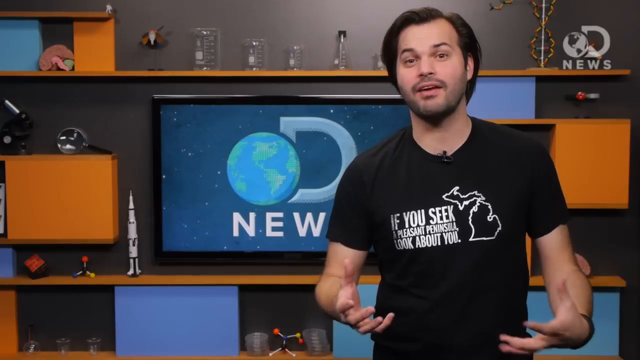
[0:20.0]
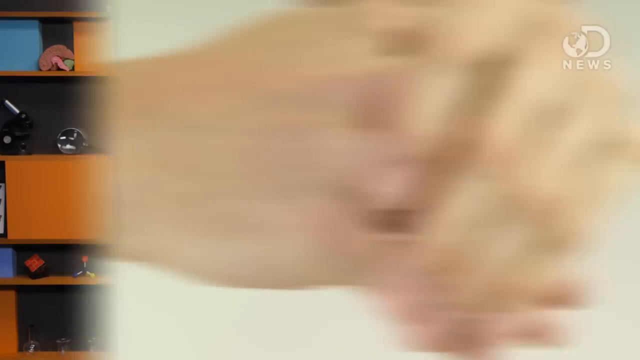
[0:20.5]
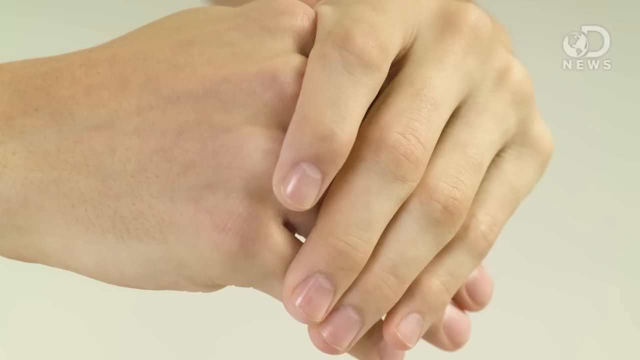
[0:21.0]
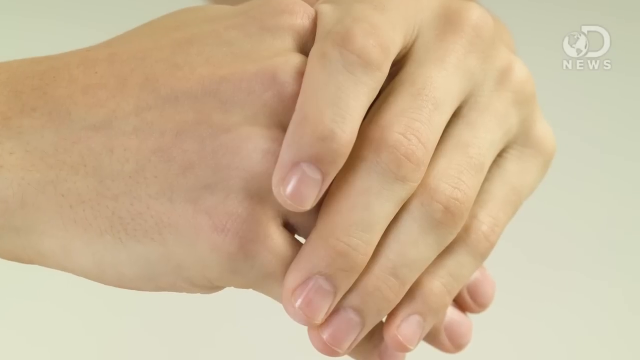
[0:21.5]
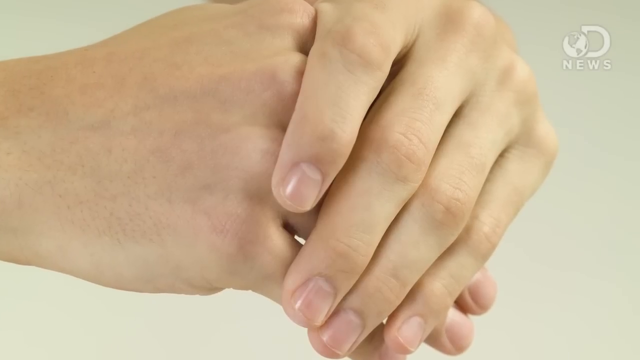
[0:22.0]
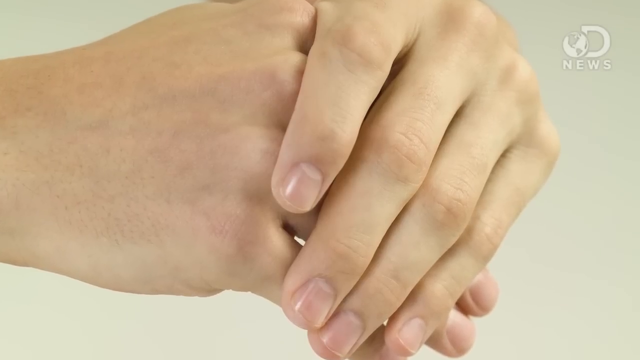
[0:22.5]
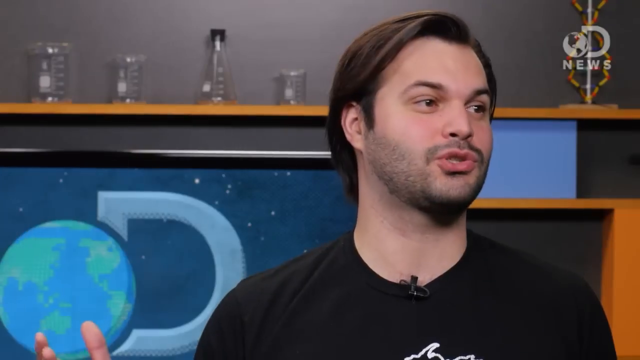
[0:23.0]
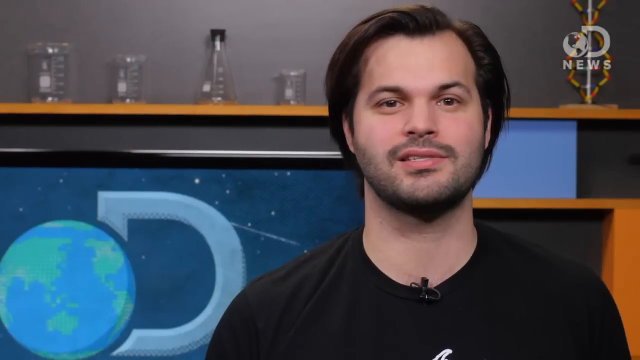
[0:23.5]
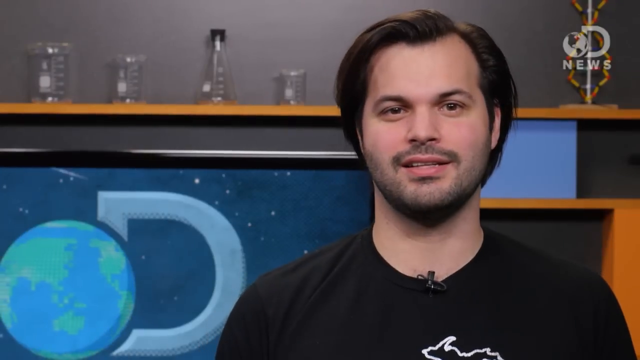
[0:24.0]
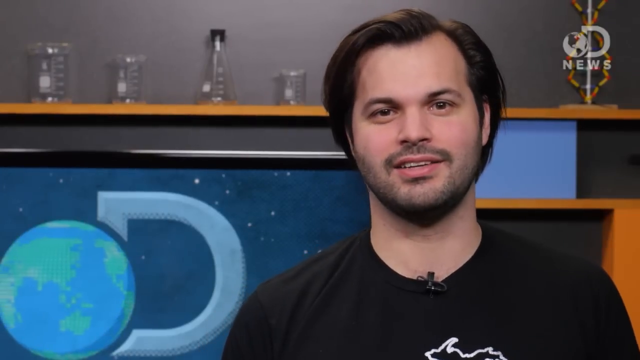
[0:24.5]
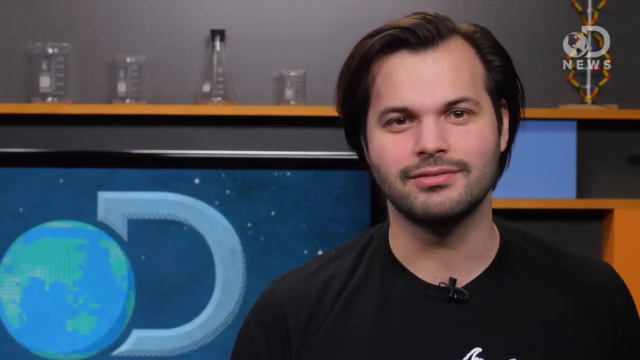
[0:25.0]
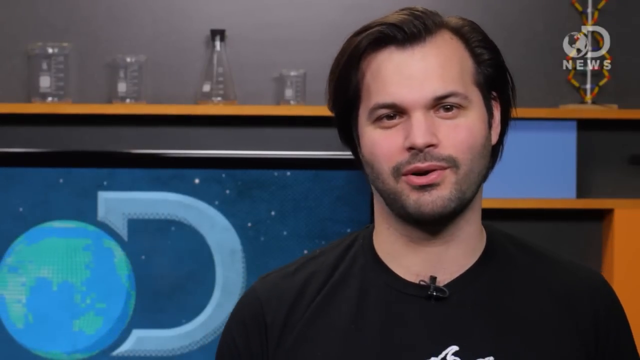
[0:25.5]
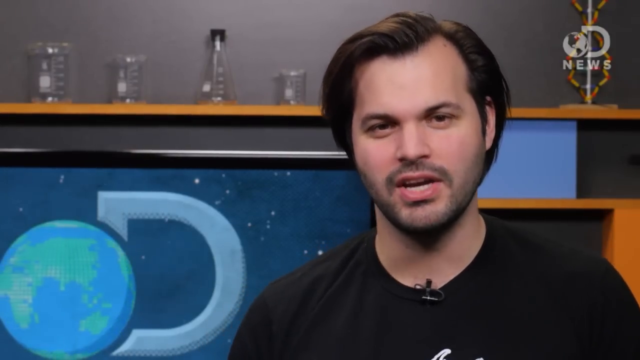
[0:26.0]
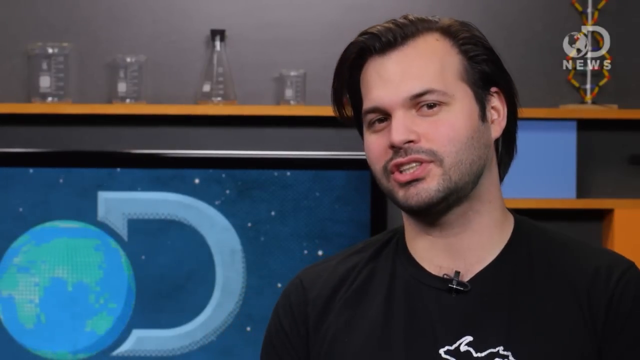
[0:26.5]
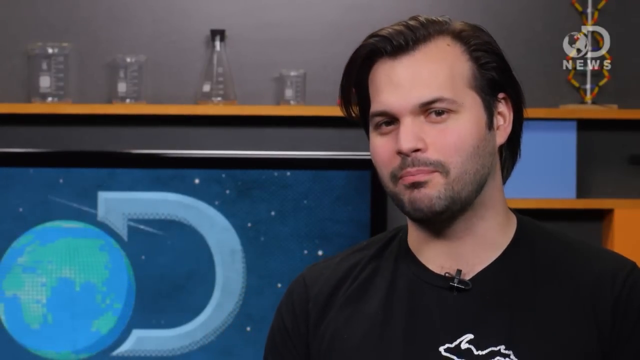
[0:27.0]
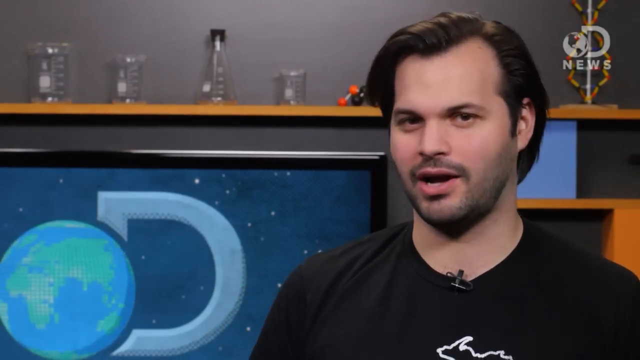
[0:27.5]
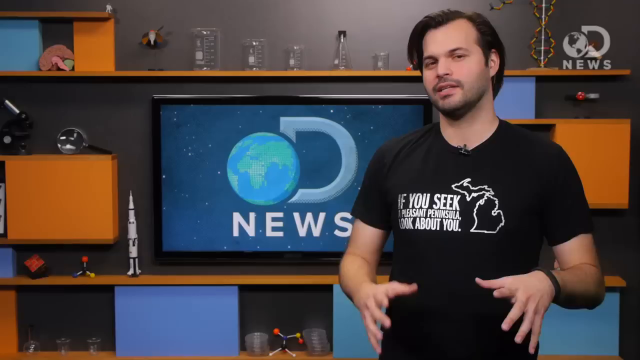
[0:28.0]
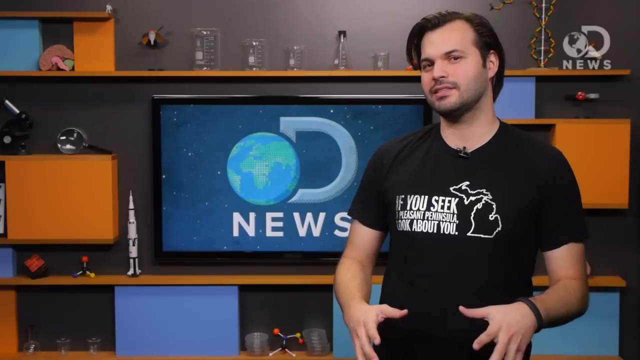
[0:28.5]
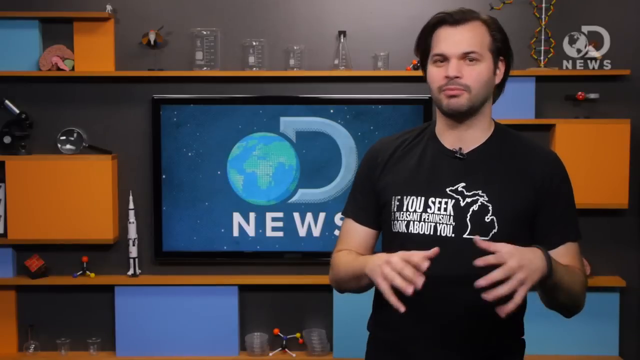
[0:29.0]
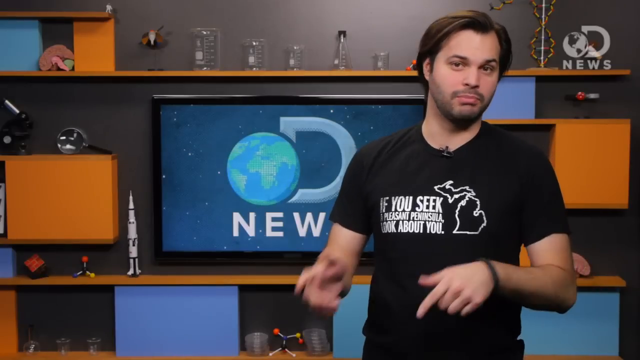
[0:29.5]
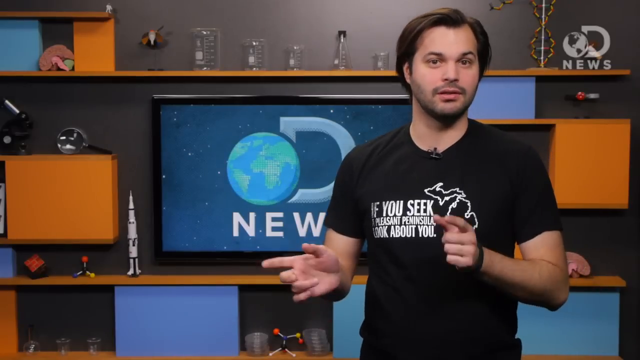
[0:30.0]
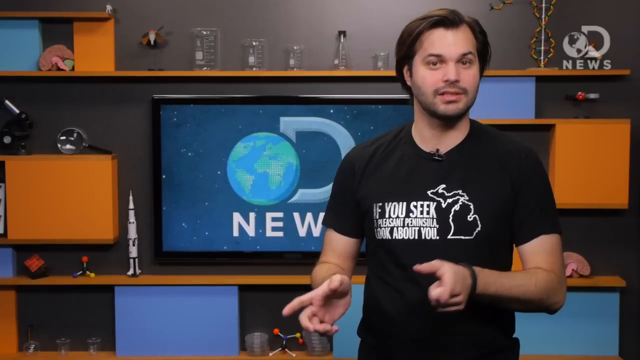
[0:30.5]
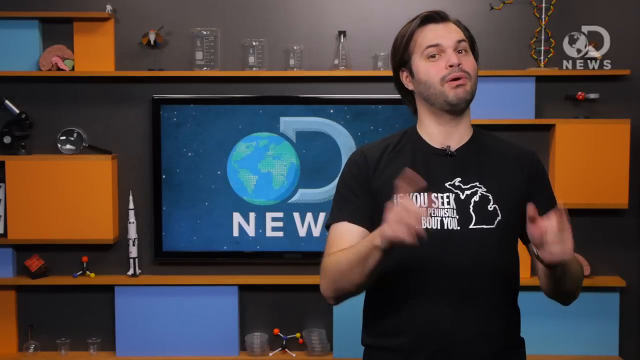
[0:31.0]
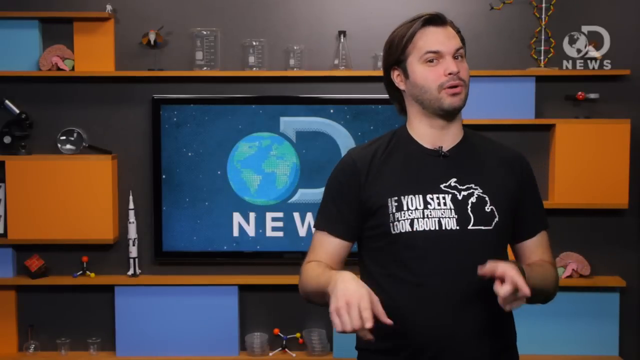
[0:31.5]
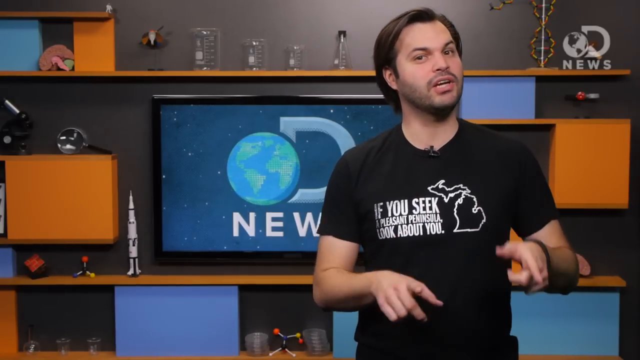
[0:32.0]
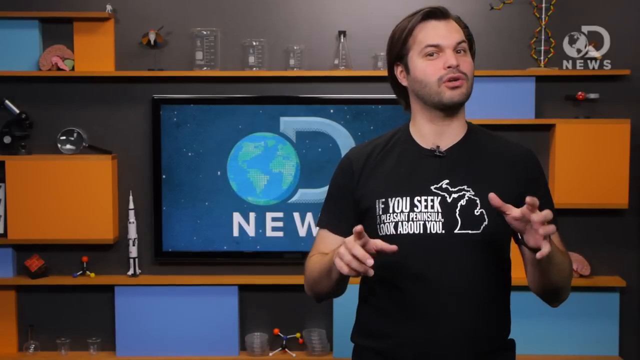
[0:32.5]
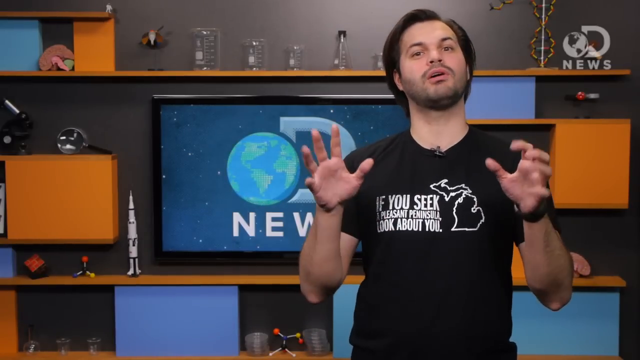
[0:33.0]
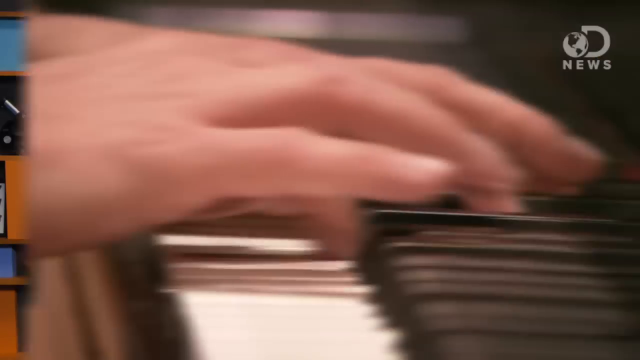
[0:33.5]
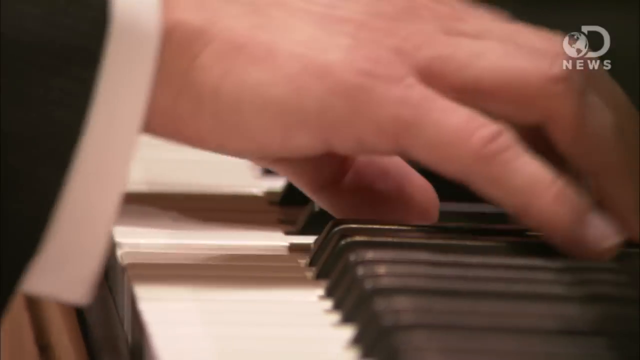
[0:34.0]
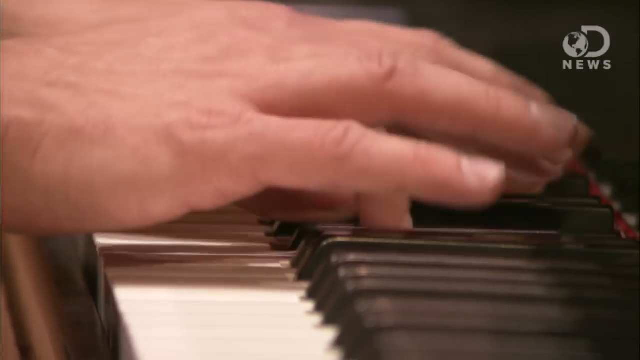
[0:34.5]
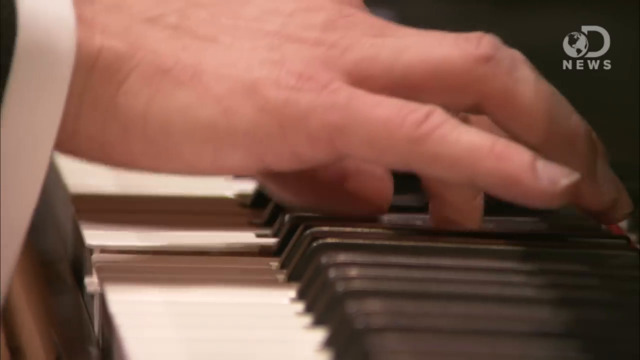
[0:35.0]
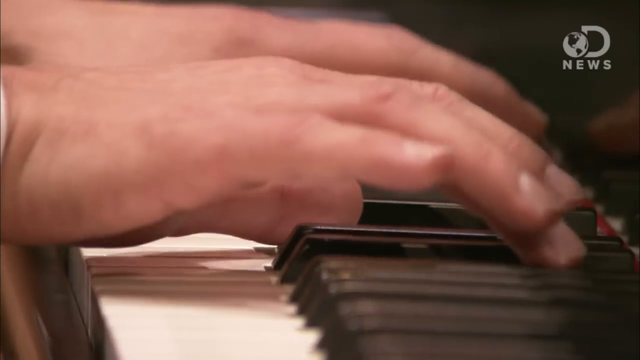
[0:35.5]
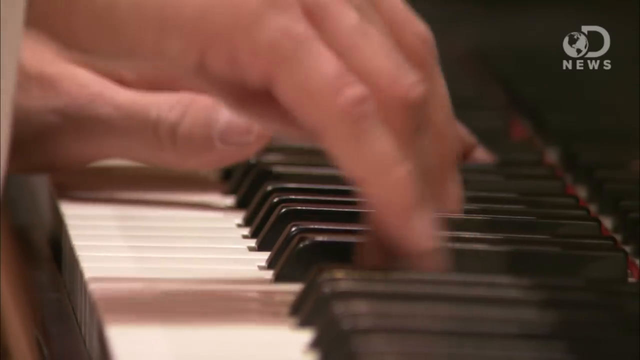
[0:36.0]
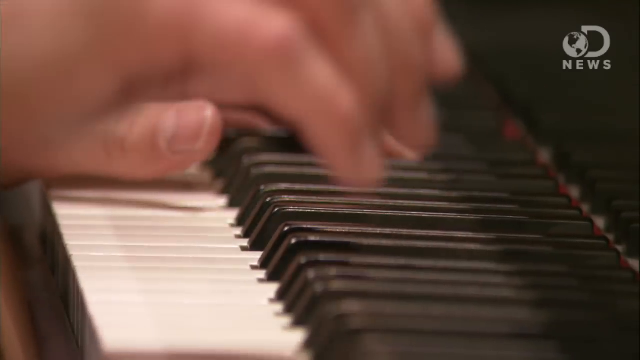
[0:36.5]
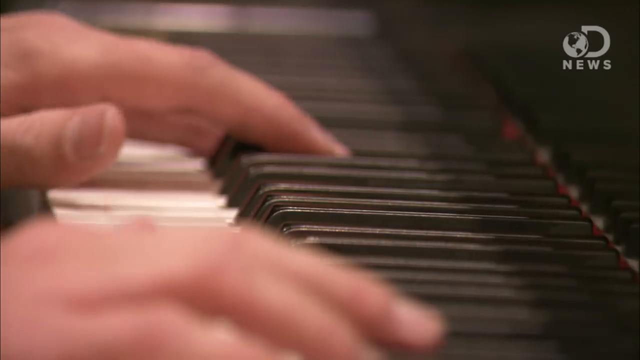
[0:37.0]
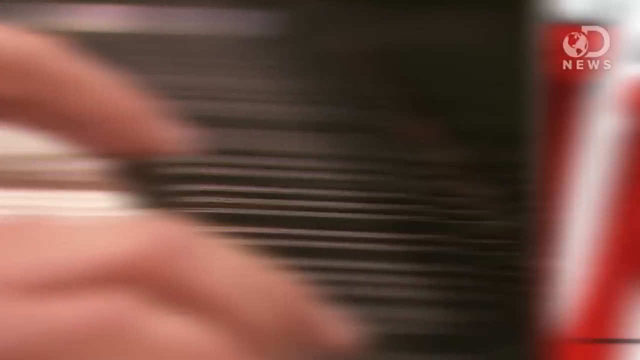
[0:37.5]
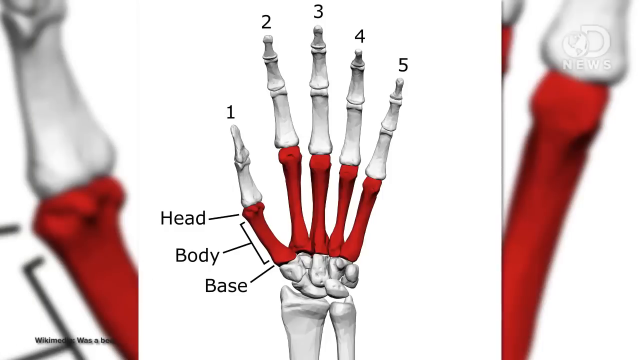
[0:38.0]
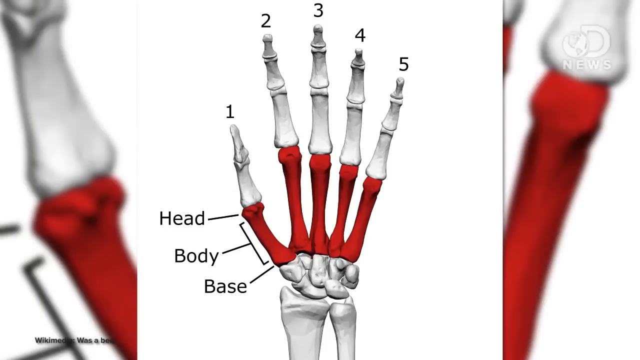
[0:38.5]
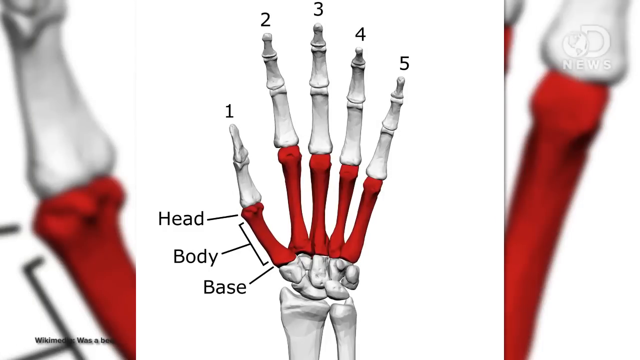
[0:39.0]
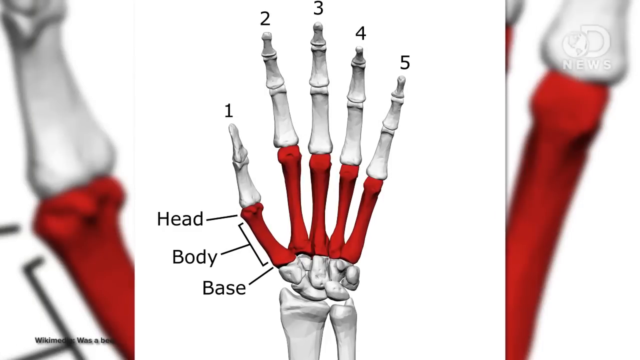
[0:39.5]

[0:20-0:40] Trace, the anchor for D News, is on screen. His black t-shirt says "if you seek a pleasant peninsula, look about you", and next to the text is an outline of the state of Michigan. The background appears to be digital. The video pans to two hands playing the white and black keys of a grand piano, then dissolves into an image of someone's hand, followed by the skeleton of someone's hand, and then two hands folded.